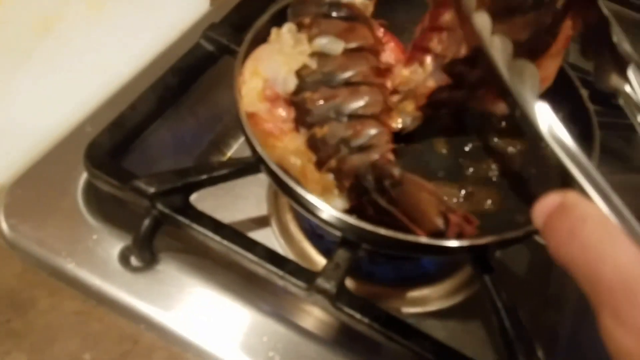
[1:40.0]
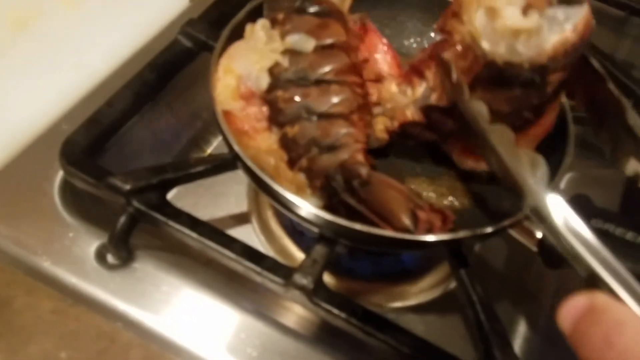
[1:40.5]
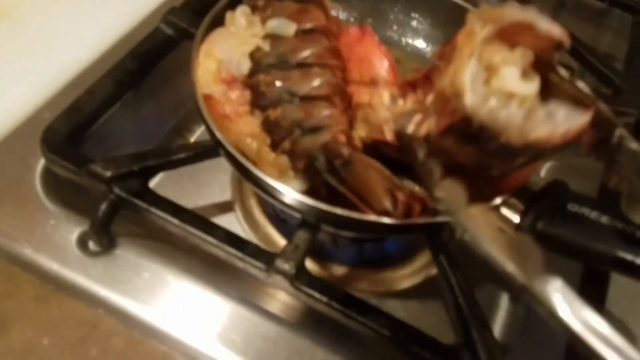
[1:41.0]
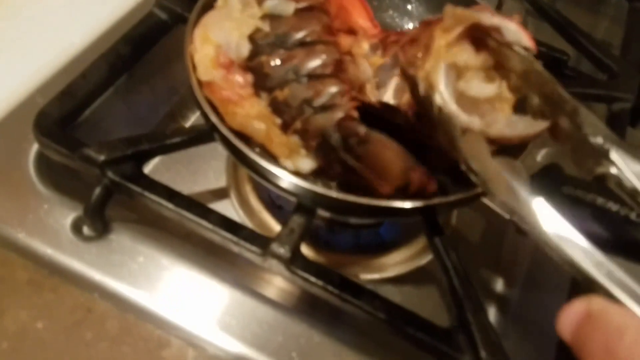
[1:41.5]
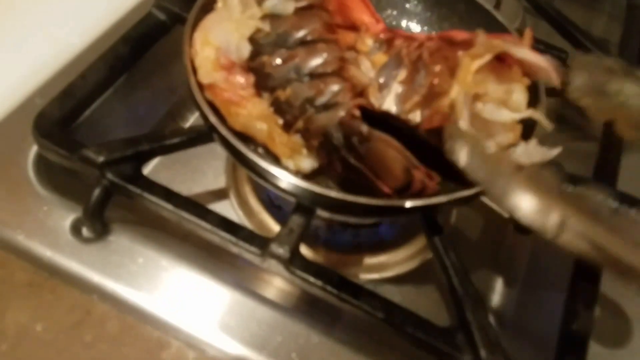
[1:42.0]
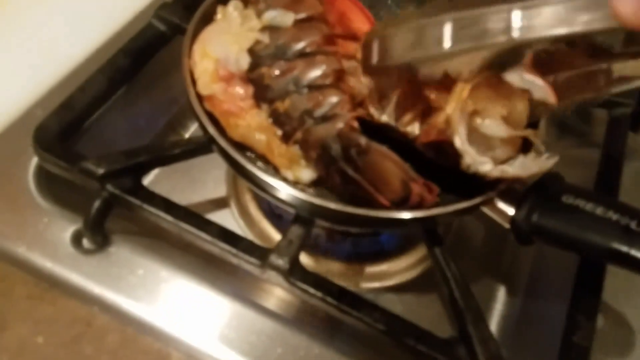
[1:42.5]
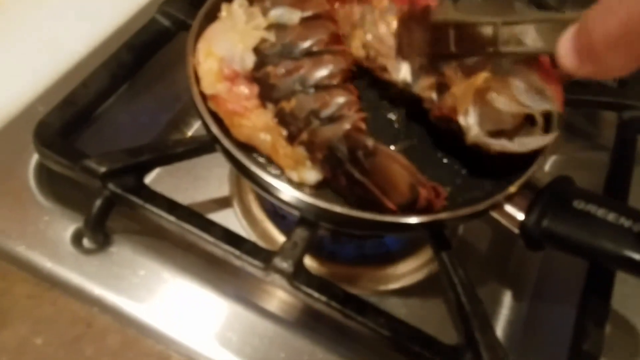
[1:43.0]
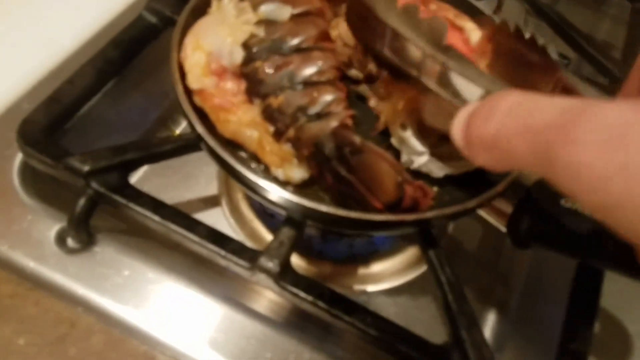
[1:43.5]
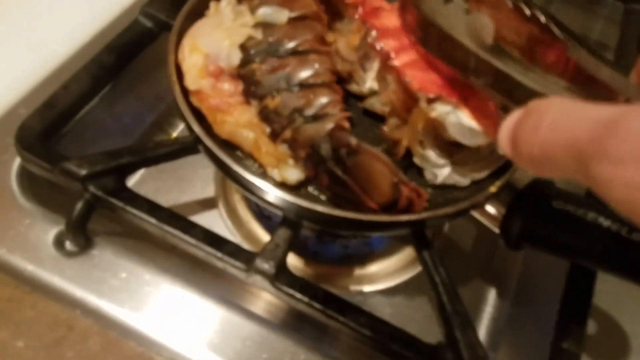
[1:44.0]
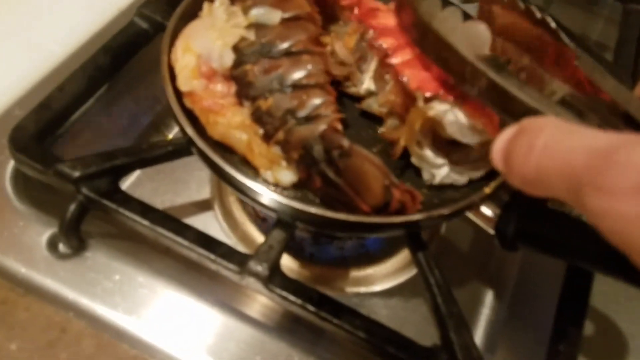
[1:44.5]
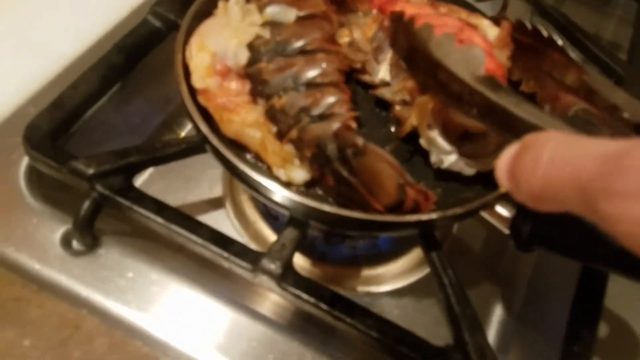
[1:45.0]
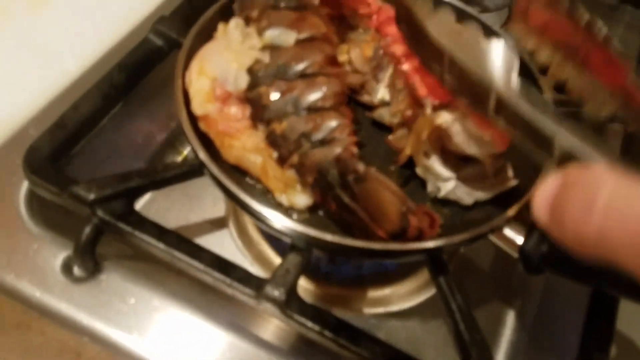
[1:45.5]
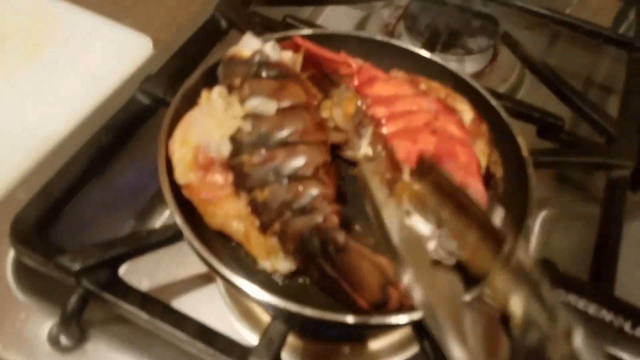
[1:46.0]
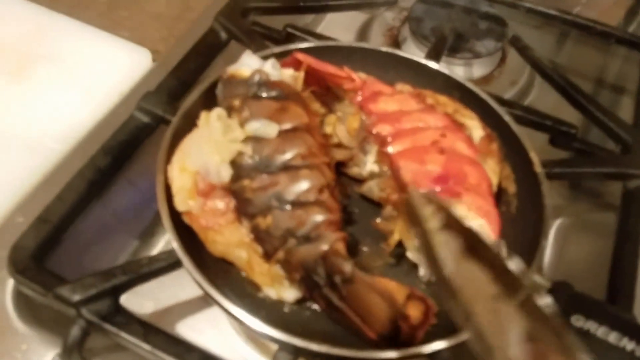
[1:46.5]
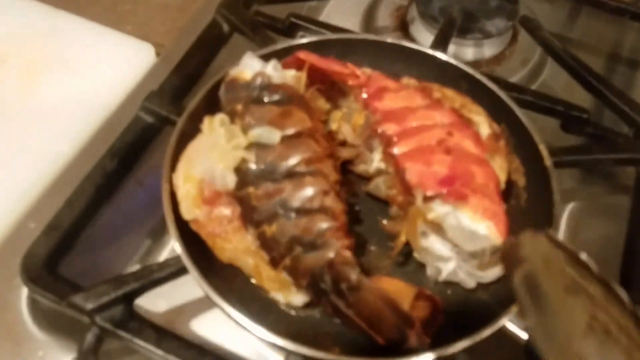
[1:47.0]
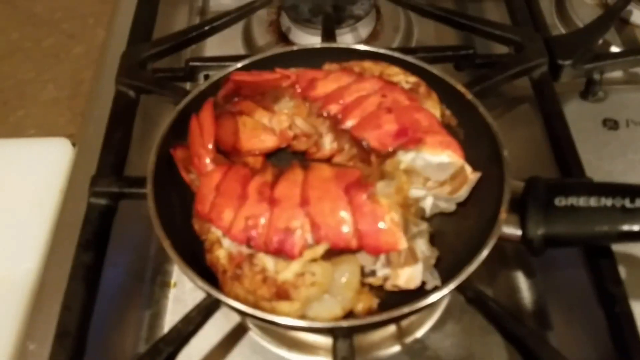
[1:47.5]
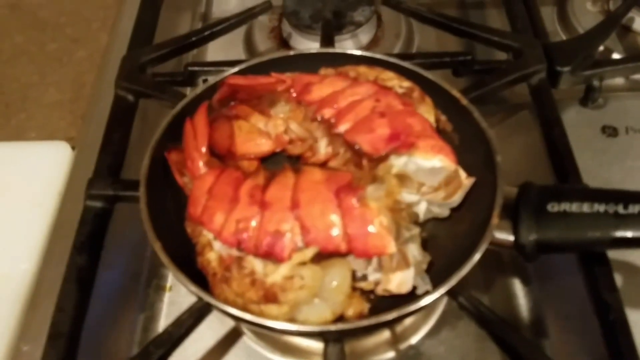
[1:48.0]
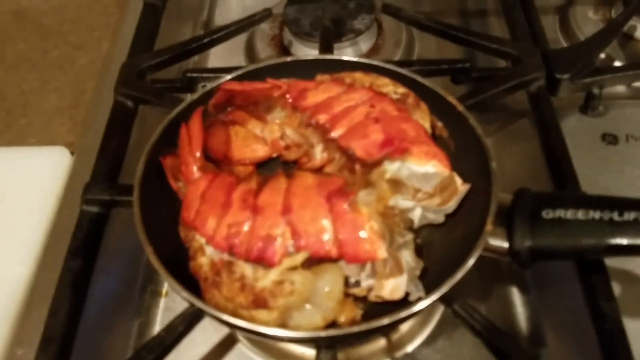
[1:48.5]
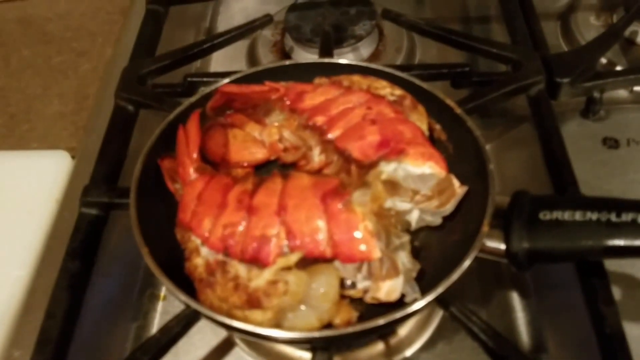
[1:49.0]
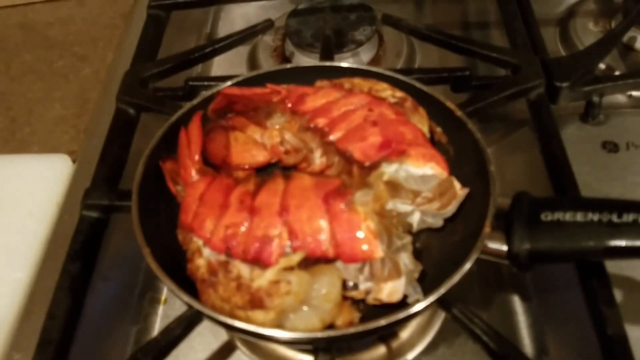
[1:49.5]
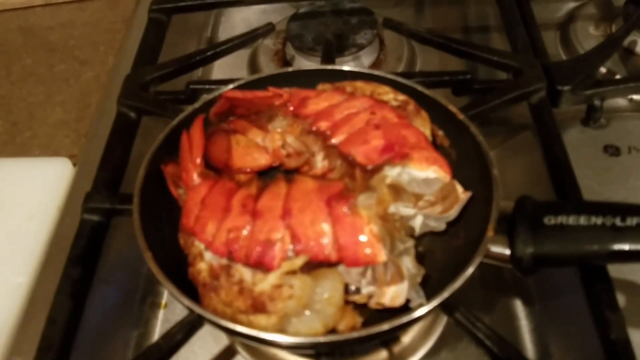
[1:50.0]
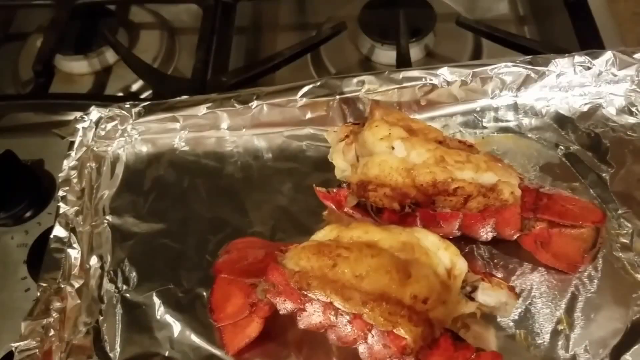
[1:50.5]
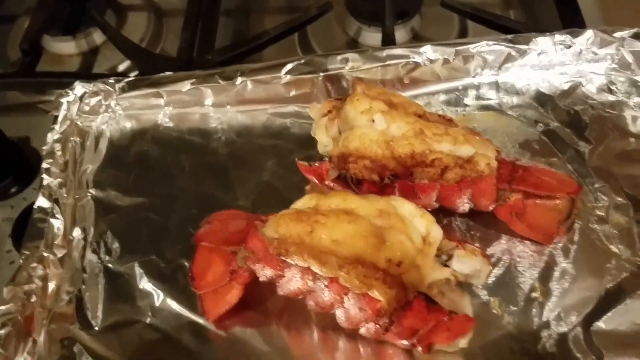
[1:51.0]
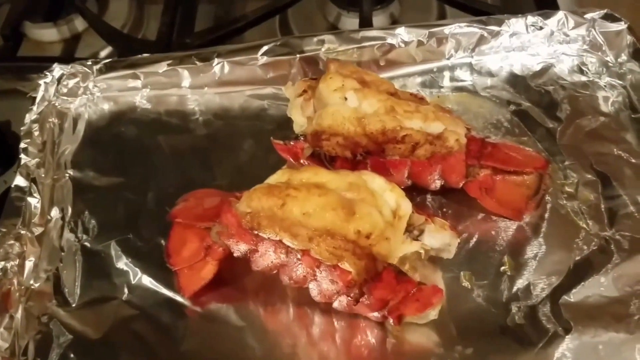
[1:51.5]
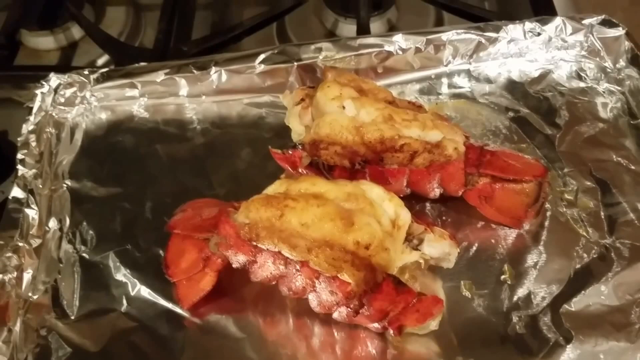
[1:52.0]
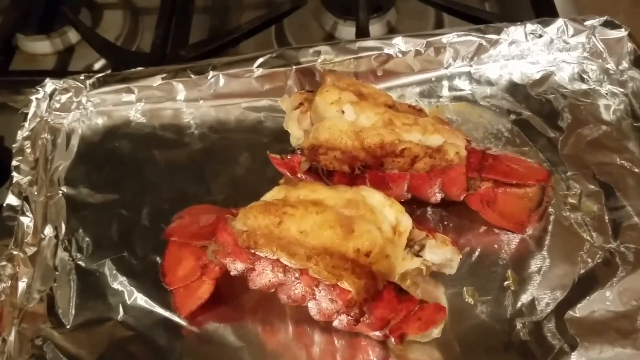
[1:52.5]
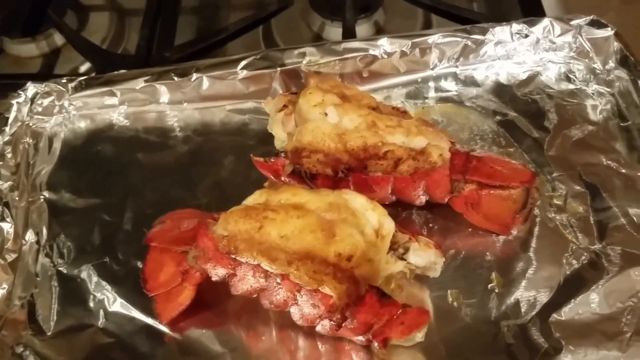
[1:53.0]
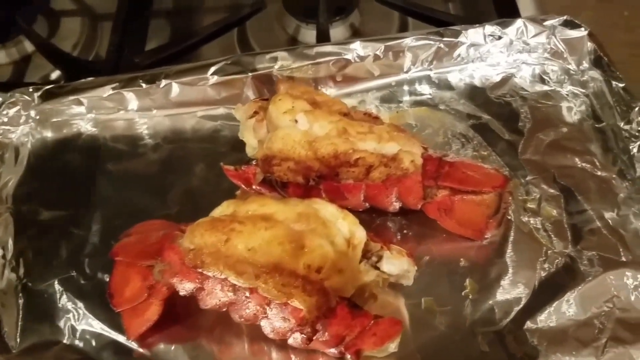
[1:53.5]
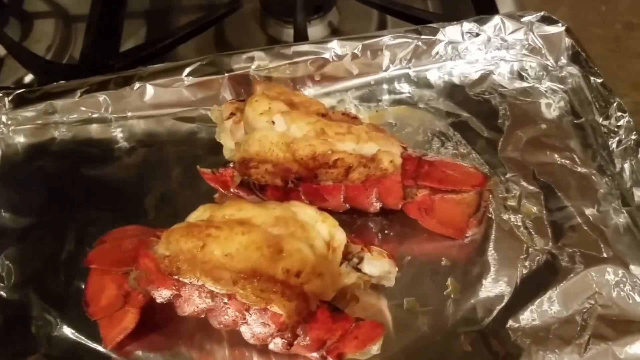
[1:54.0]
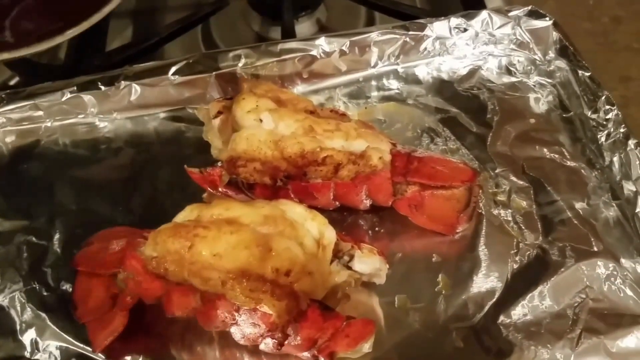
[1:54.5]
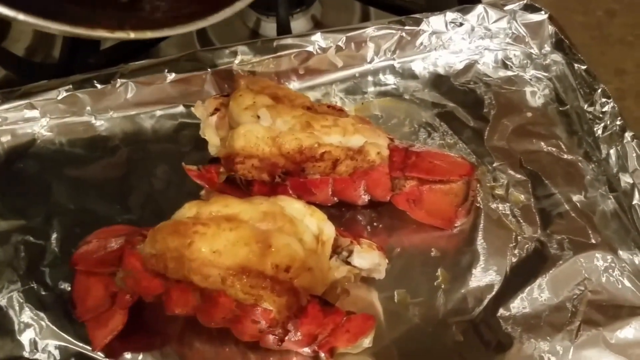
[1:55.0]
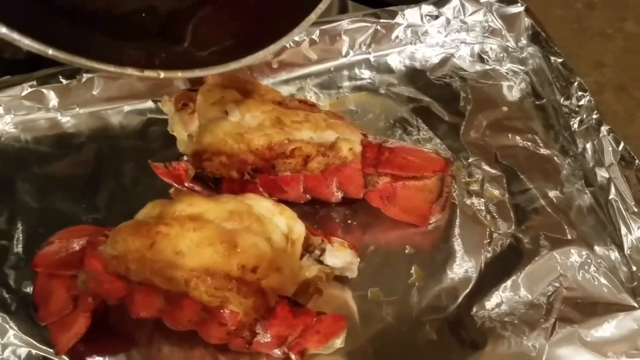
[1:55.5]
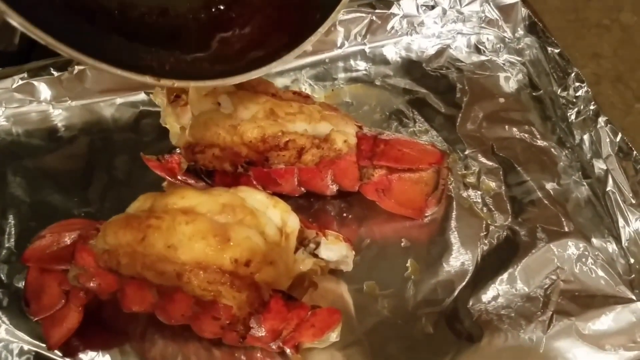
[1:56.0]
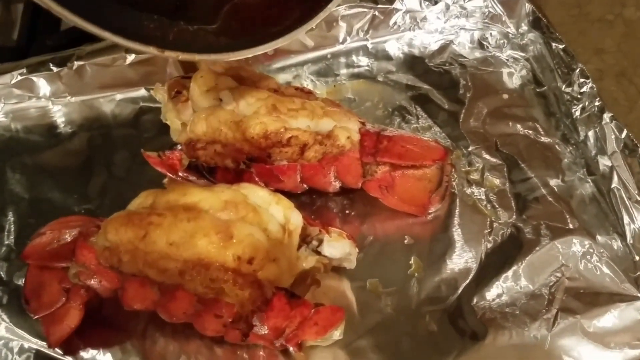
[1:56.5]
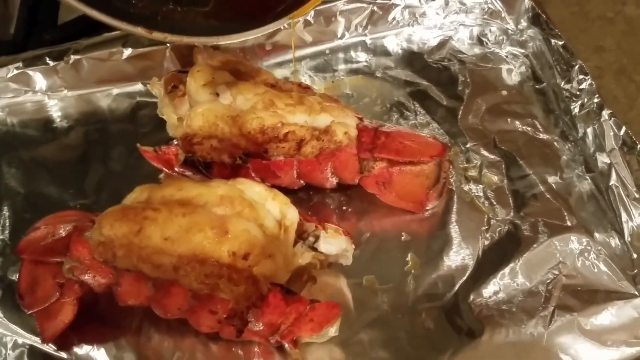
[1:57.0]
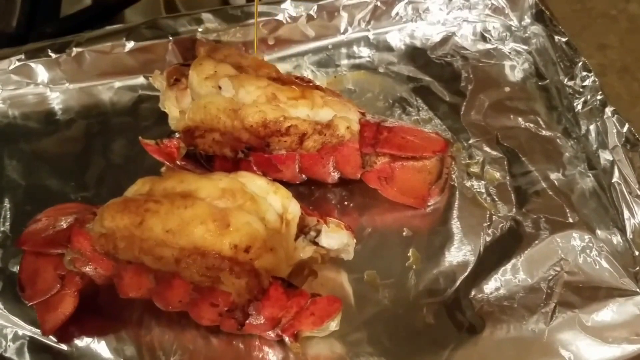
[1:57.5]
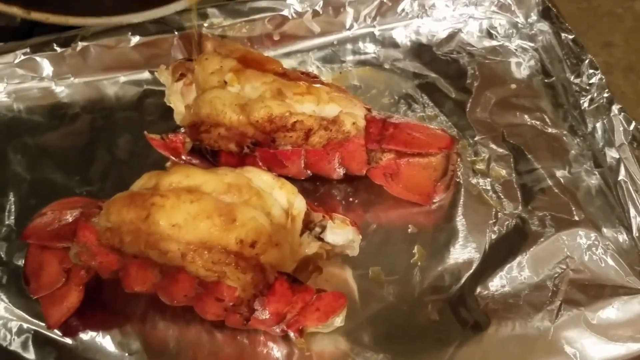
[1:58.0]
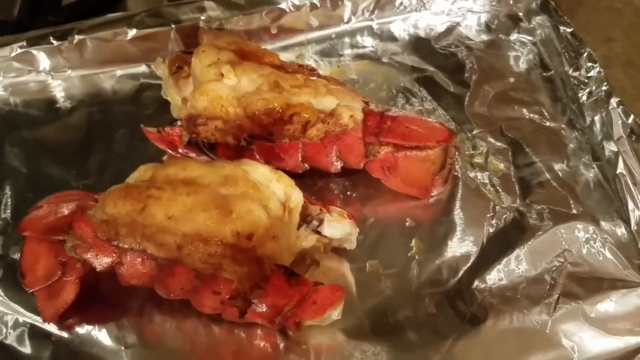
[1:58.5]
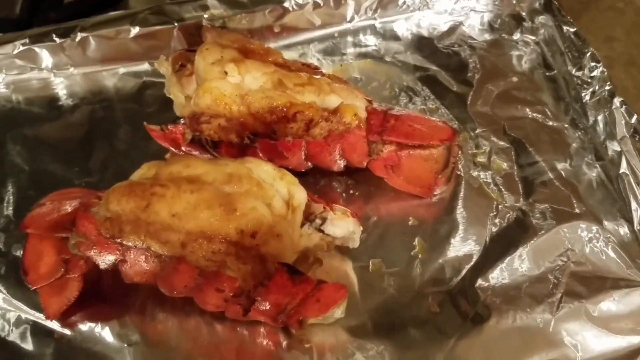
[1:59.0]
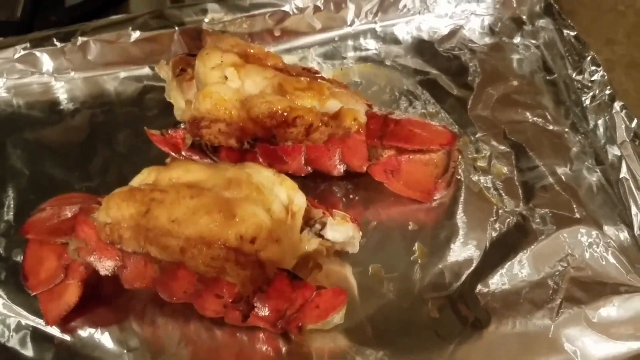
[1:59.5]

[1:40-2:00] In a kitchen setting, the top of a lit stove shows a blue flame, and on top of it is a circular black non-stick pan with a long black handle with the words "Green Life" written in white. Two lobster tails are cooking in butter in the pan. A hand carrying a pair of tongs repeatedly turns the lobster tails as they cook. The butter continues to bubble under the tails, and the skin of the tails has changed from its initial black to pink. As they finish cooking, the camera angle quickly changes to a silver foil on a kitchen counter, with the two lobster tails on it, skin side down. The camera zooms into the tails, and from the left-hand side the cook picks up the pan the lobster was cooked in and pours the buttery sauce over the tails.